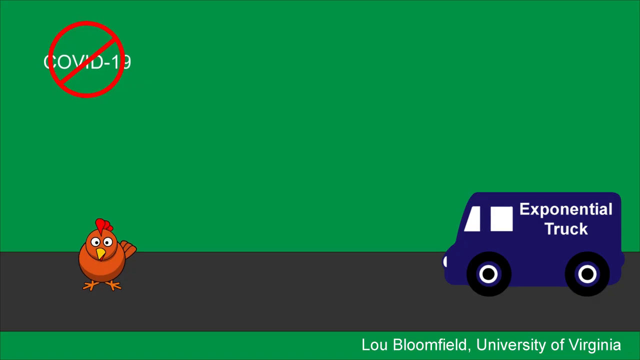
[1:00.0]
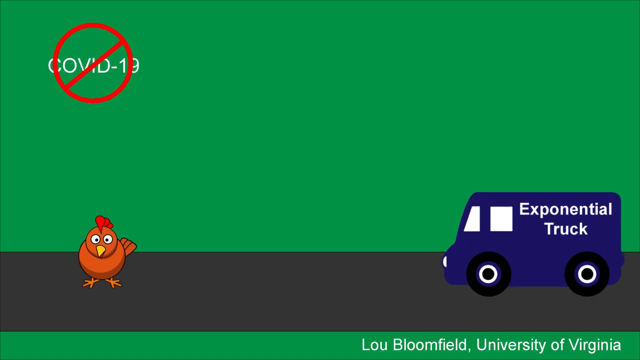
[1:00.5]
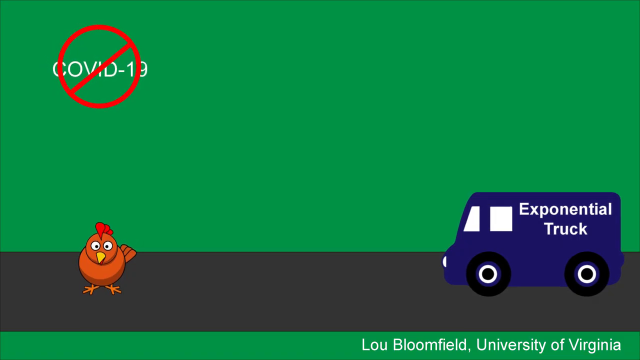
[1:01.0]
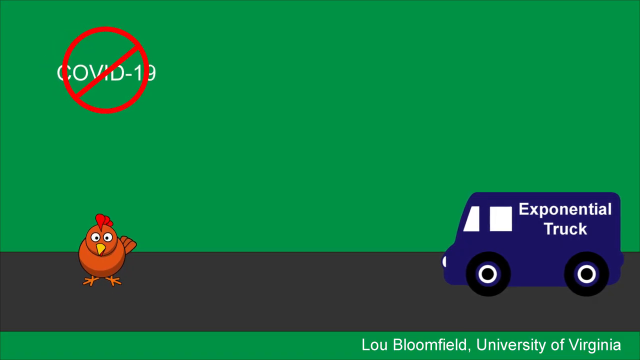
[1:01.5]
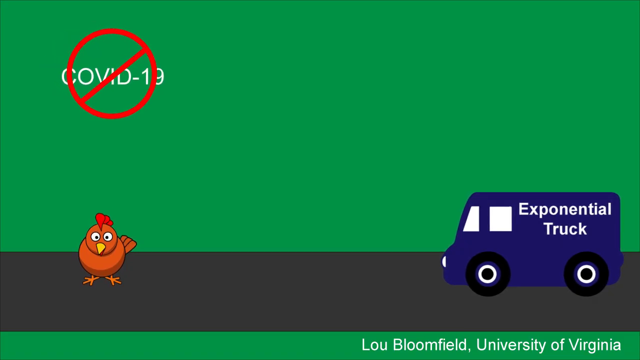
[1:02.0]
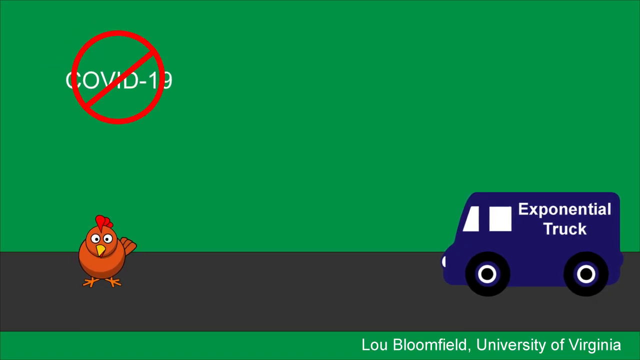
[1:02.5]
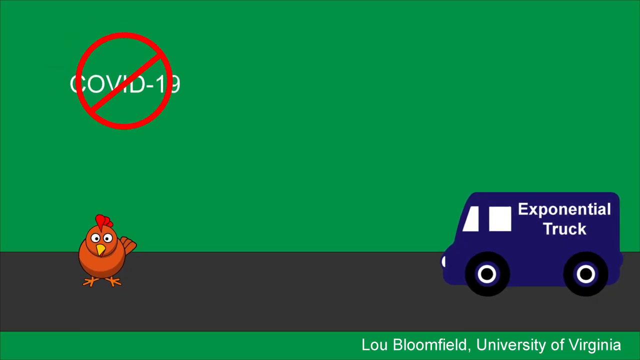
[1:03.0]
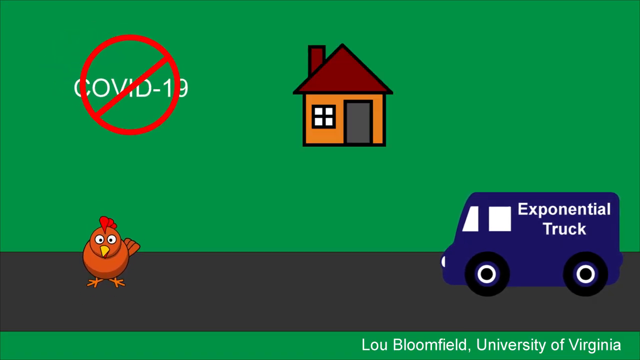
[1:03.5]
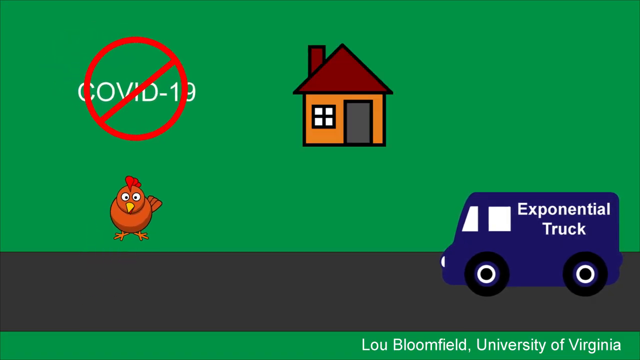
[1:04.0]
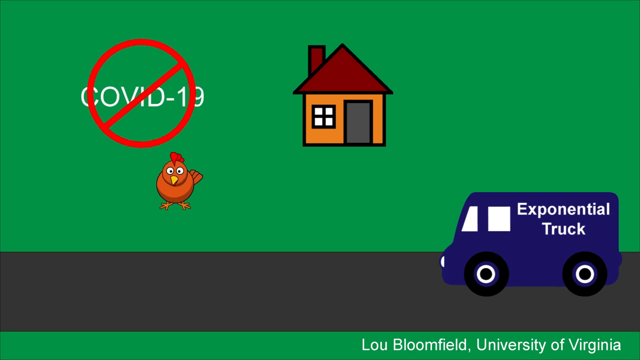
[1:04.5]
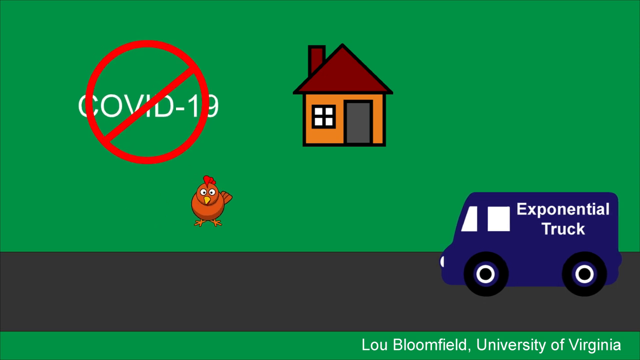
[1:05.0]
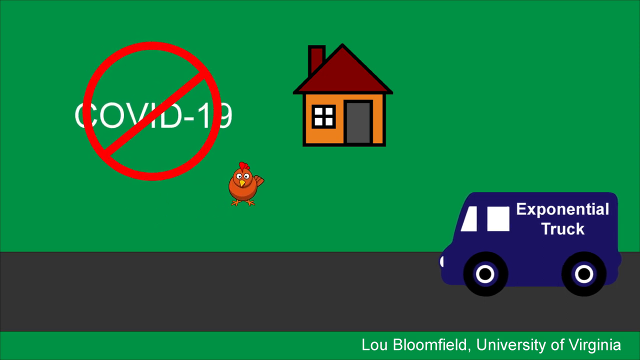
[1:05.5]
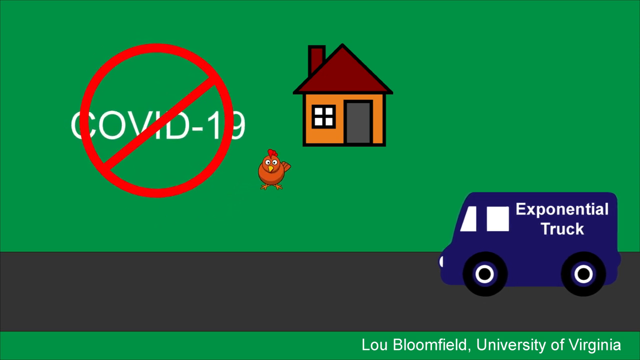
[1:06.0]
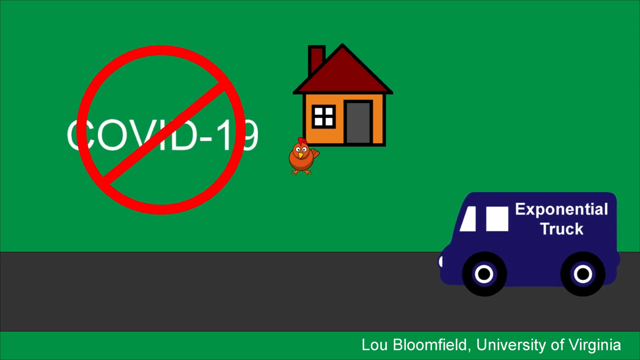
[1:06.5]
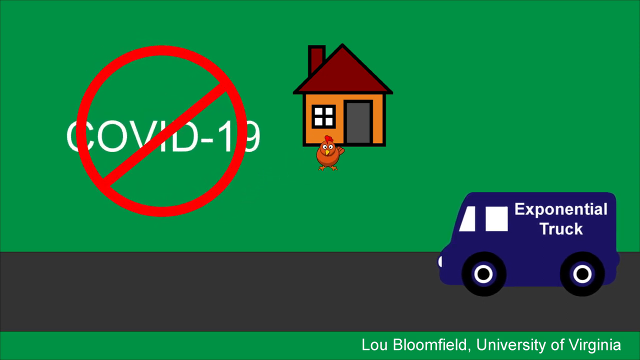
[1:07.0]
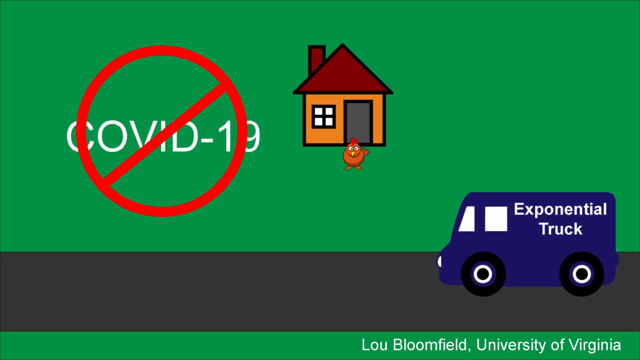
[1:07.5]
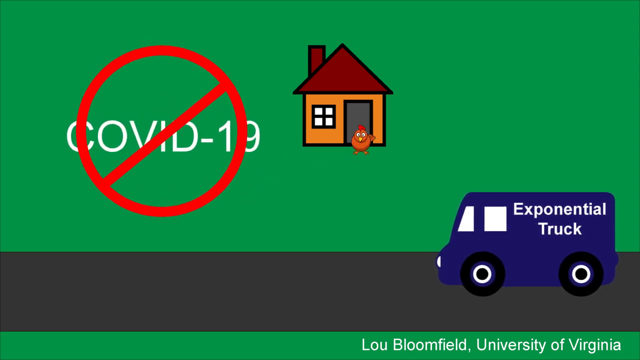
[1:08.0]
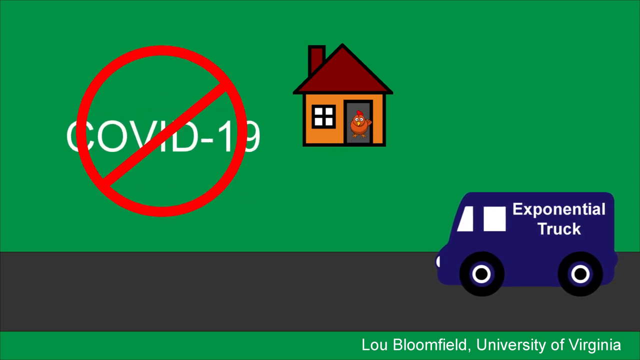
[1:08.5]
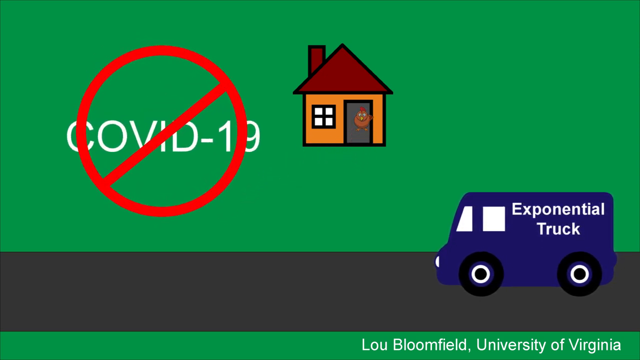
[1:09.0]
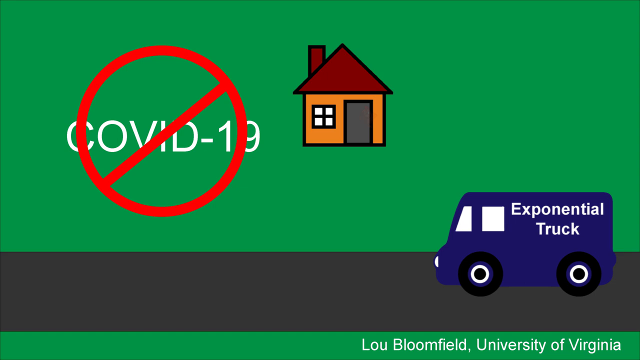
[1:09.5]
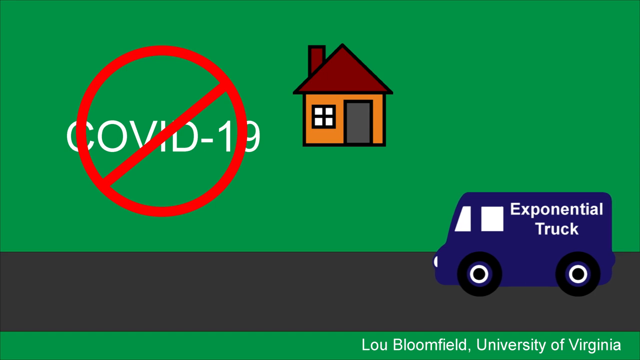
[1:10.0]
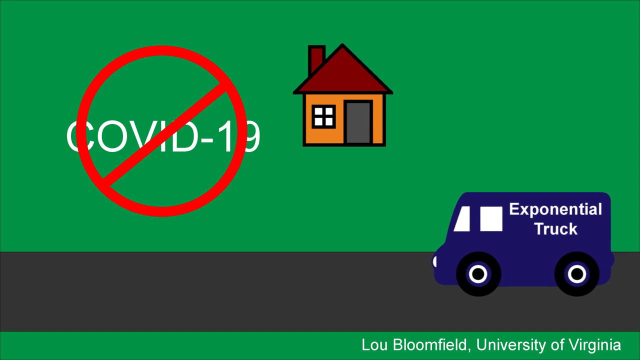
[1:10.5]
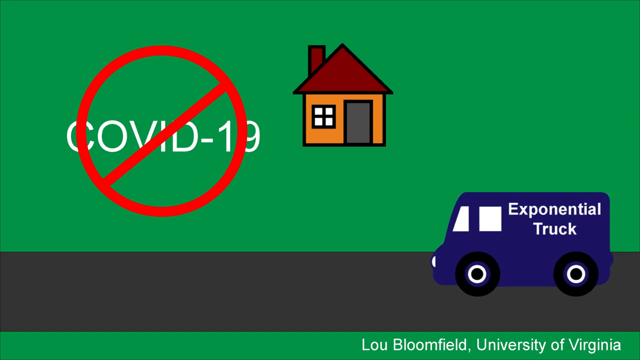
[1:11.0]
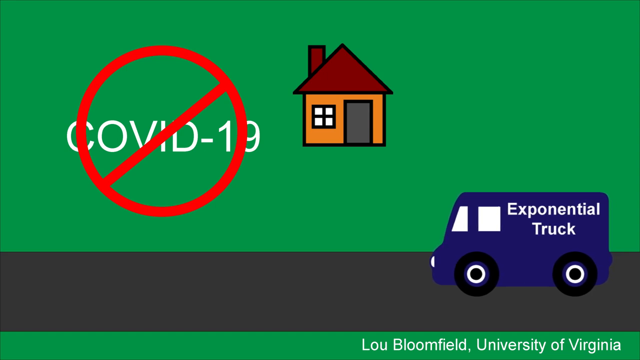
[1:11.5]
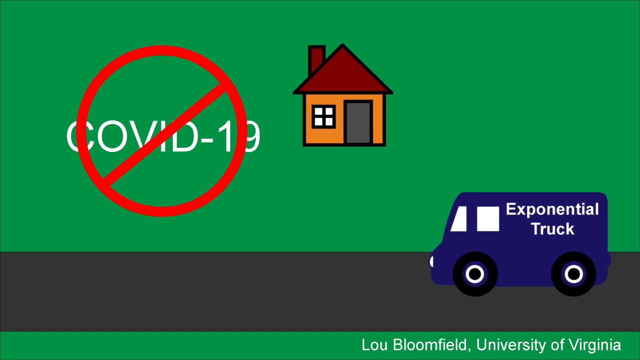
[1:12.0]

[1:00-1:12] The background is green with a black bottom part. In the top left corner "COVID-19" is written with a red prohibited circle. The chicken is in the bottom left and the truck in the bottom right. The COVID-19 and circle approach a house that appears in the center of the screen: a round orange house with a red roof, a chimney on the roof, a window with four partitions and a grey door. The chicken moves towards the house and enters it, and COVID-19 zooms to the front of the screen. "Exponential truck" is written on the truck, which moves slowly.